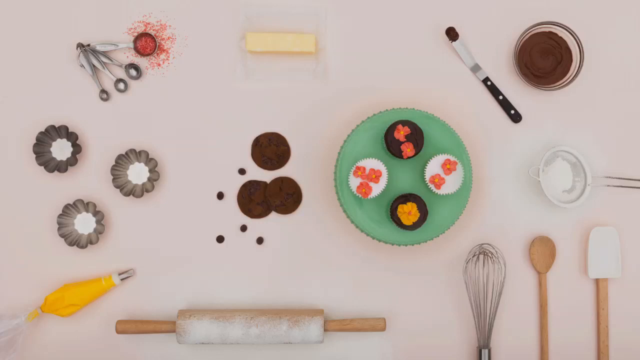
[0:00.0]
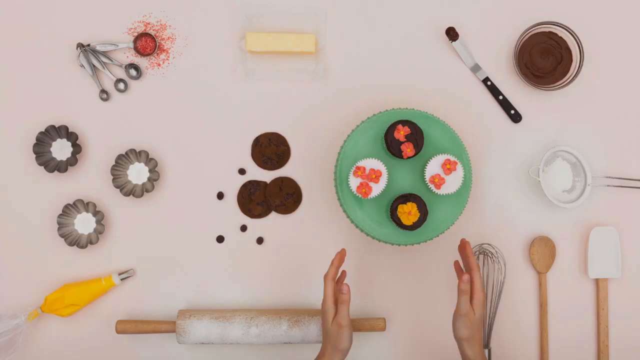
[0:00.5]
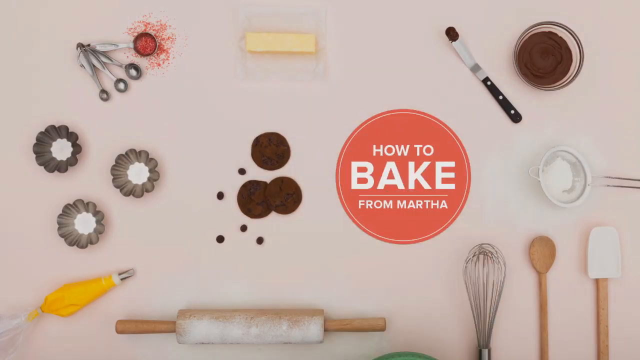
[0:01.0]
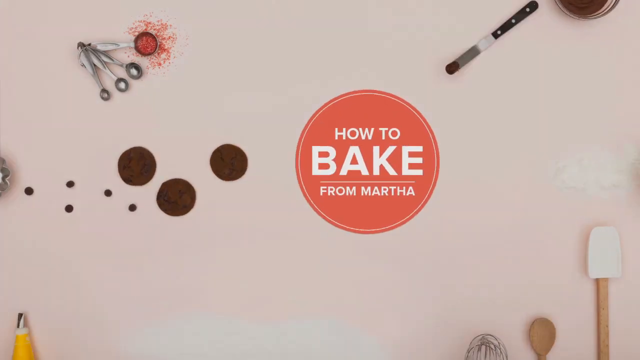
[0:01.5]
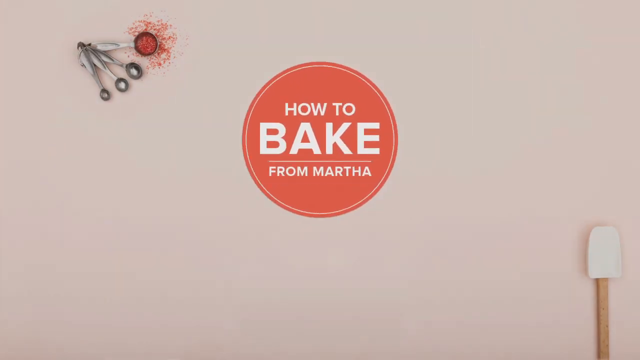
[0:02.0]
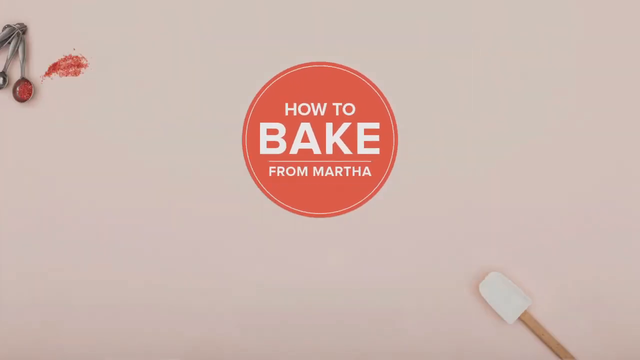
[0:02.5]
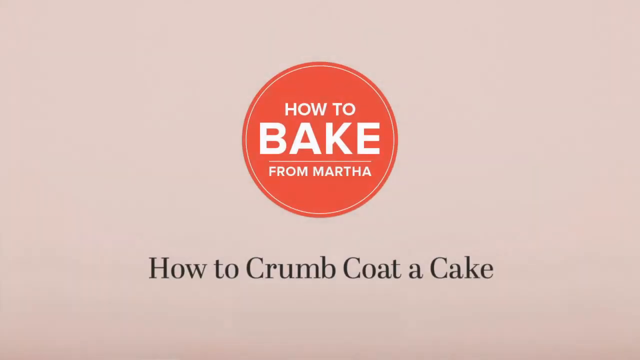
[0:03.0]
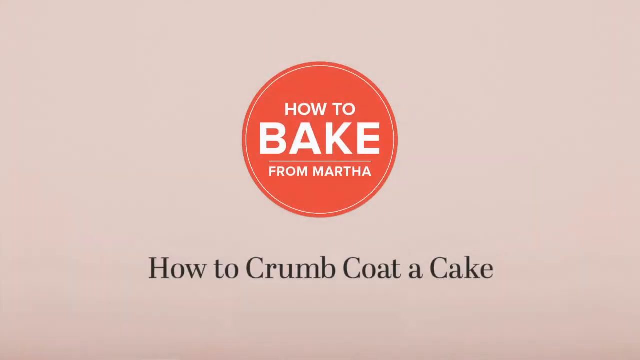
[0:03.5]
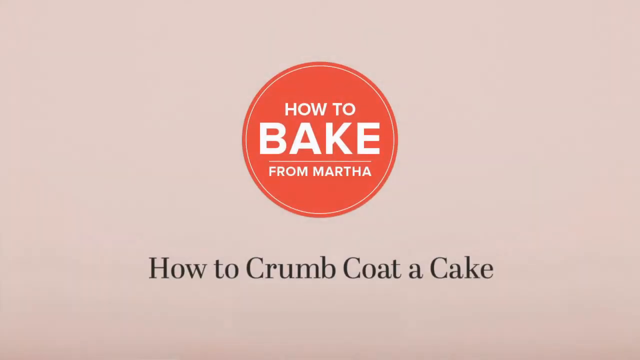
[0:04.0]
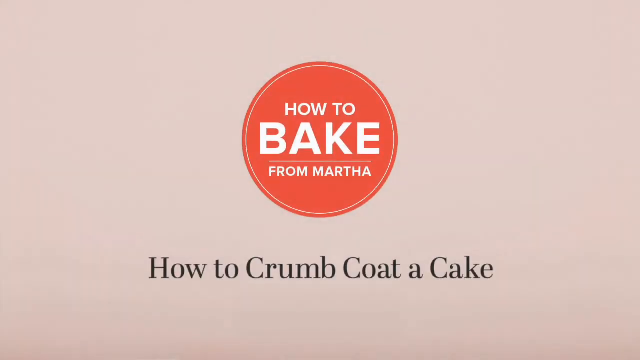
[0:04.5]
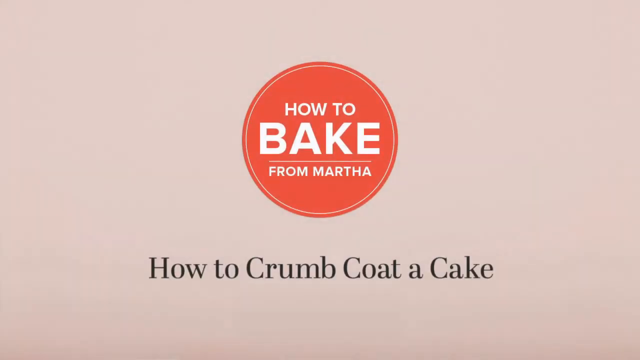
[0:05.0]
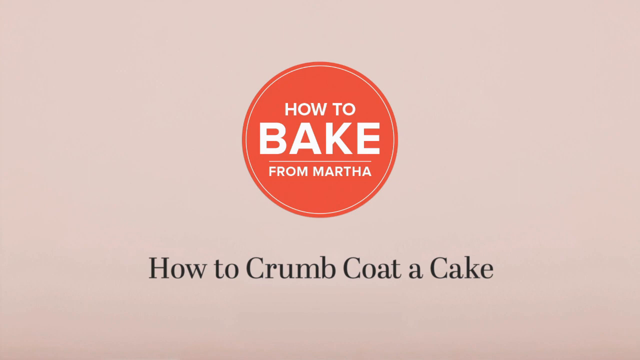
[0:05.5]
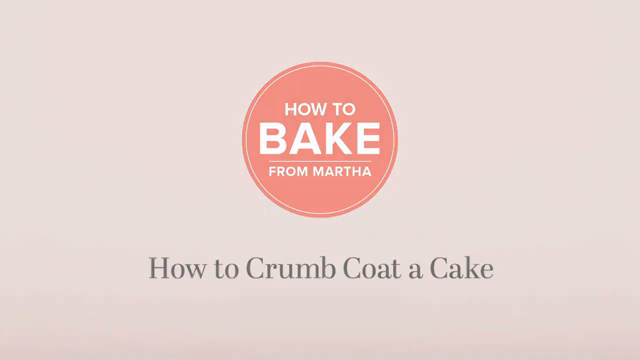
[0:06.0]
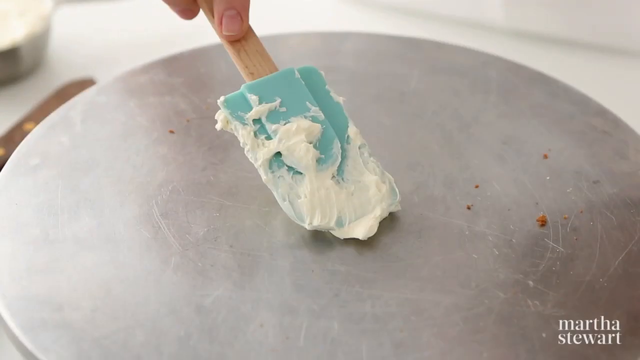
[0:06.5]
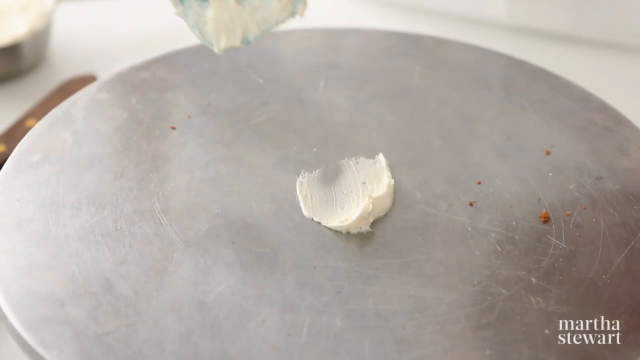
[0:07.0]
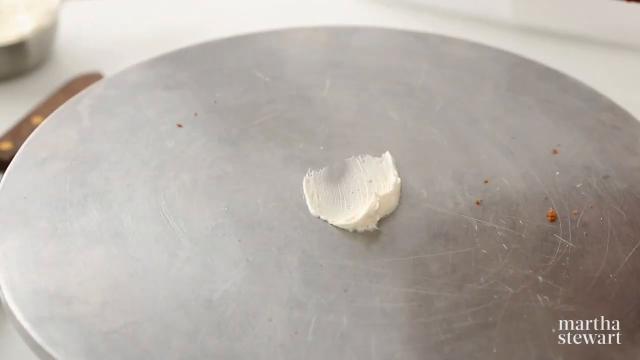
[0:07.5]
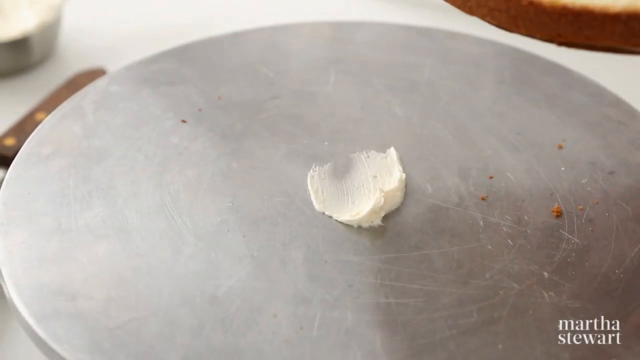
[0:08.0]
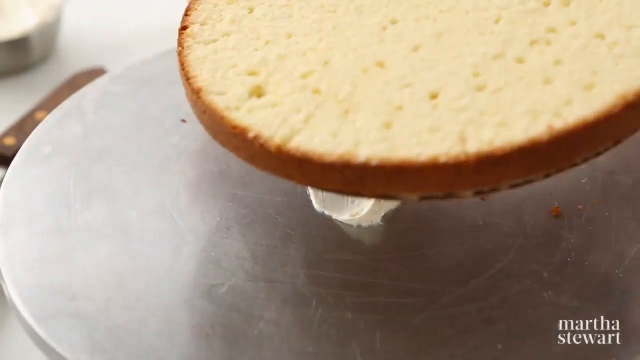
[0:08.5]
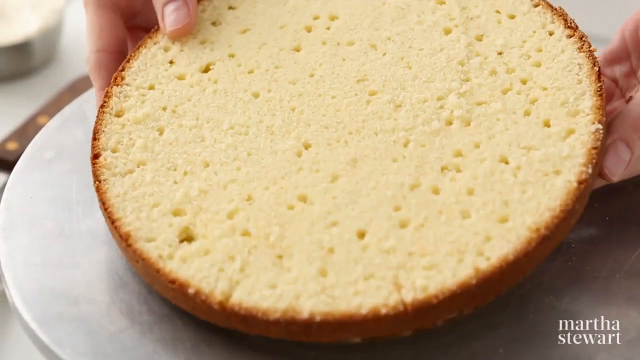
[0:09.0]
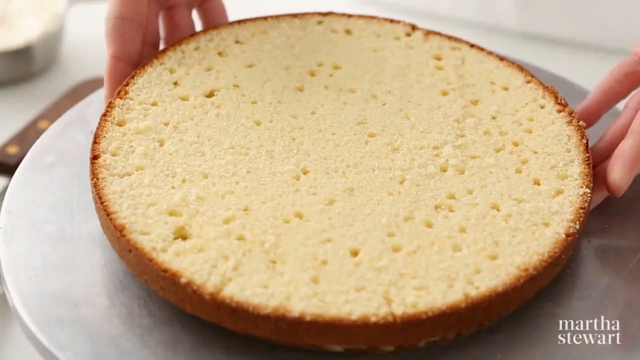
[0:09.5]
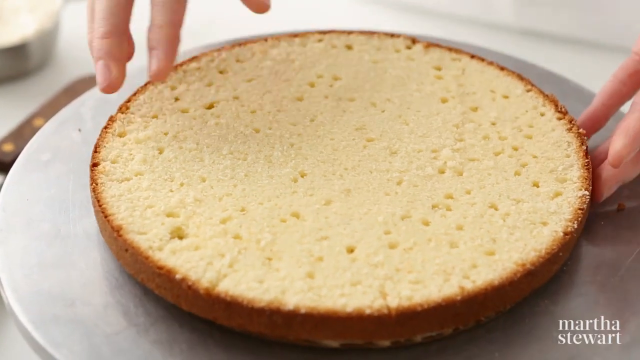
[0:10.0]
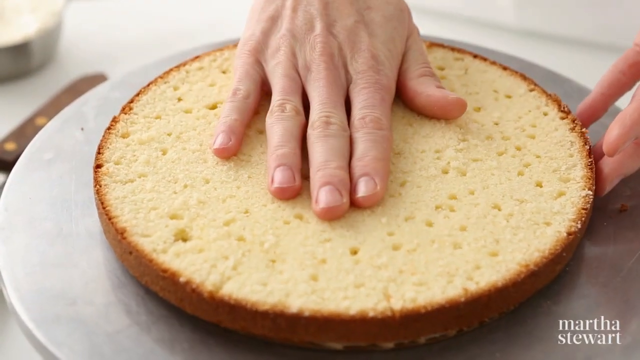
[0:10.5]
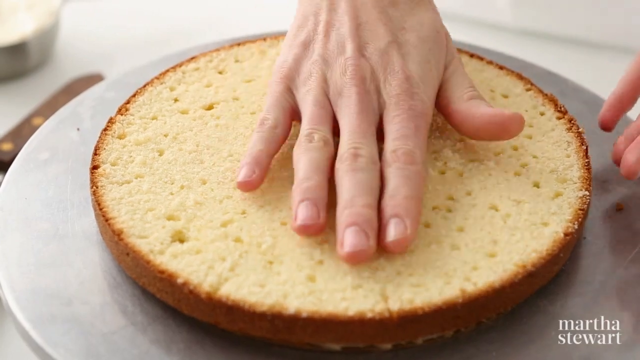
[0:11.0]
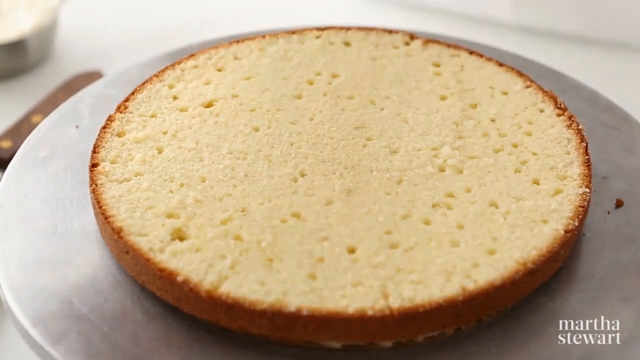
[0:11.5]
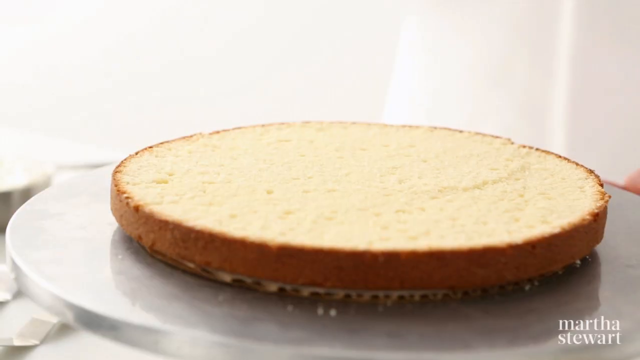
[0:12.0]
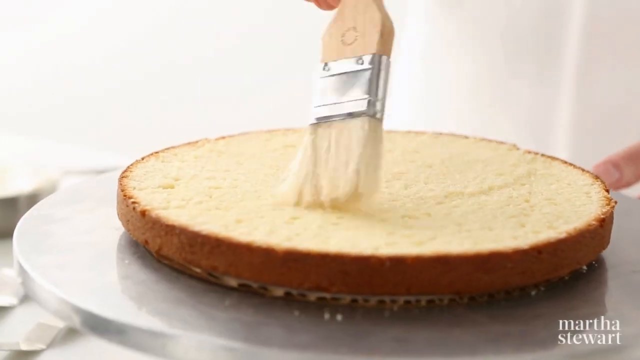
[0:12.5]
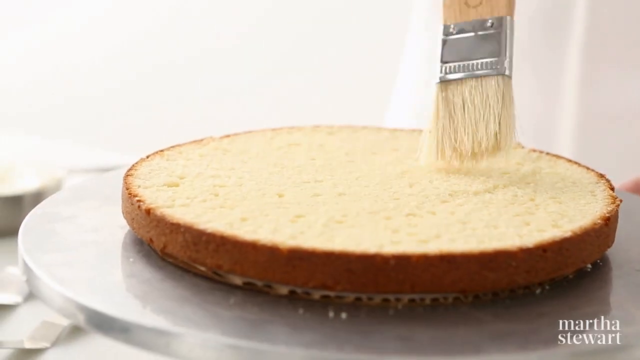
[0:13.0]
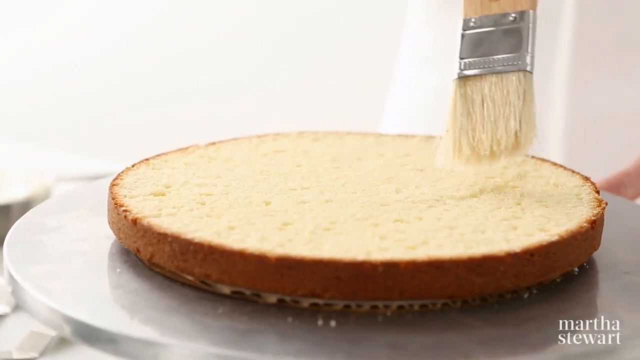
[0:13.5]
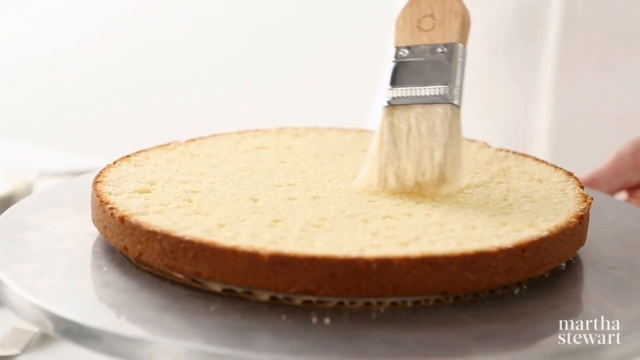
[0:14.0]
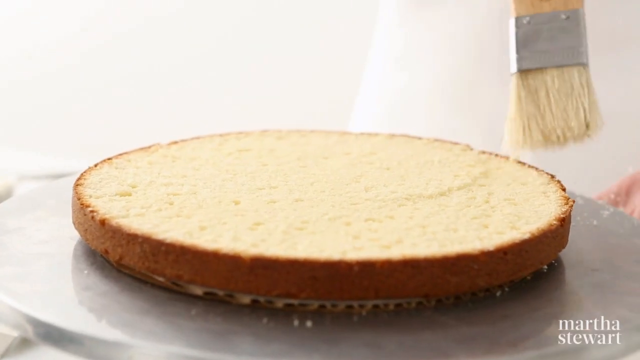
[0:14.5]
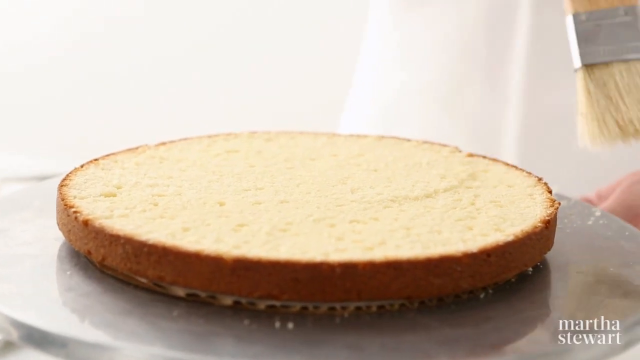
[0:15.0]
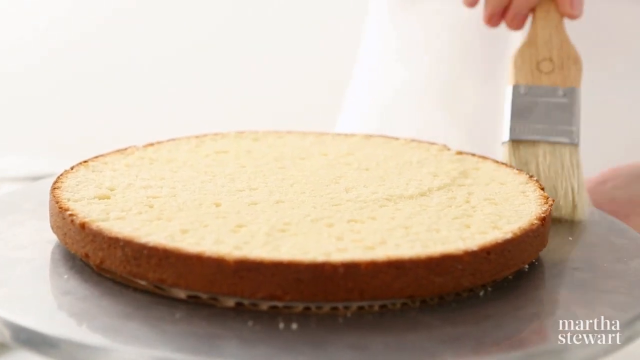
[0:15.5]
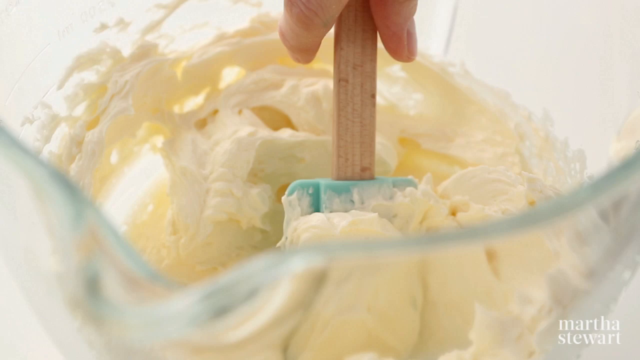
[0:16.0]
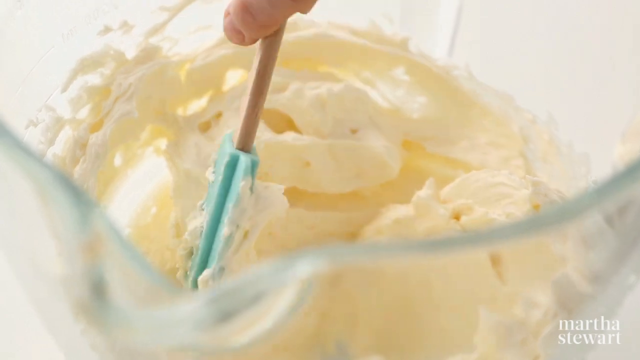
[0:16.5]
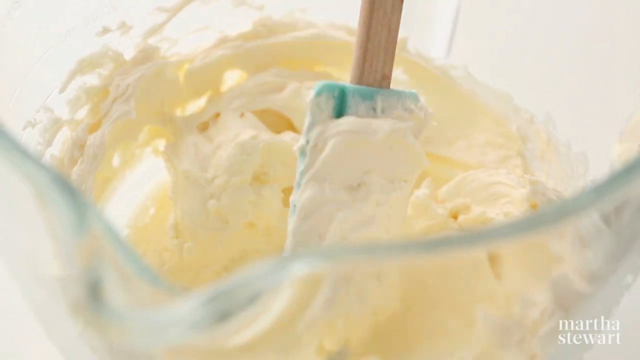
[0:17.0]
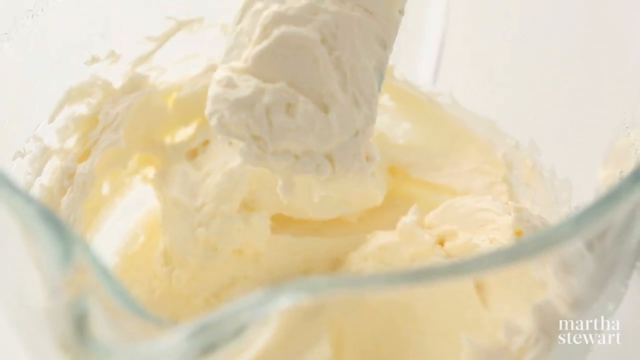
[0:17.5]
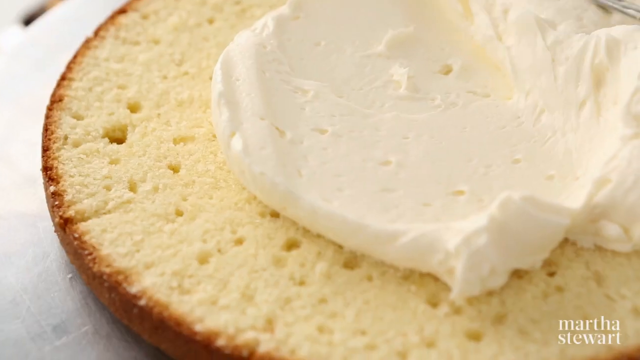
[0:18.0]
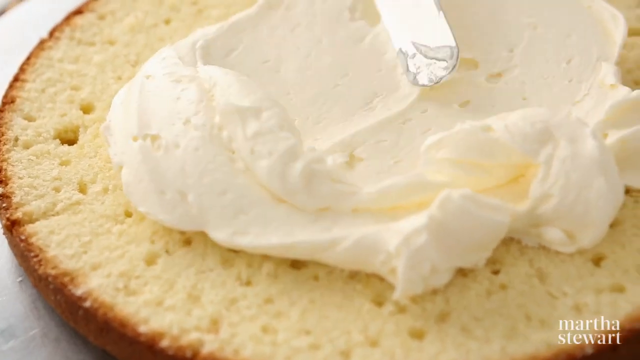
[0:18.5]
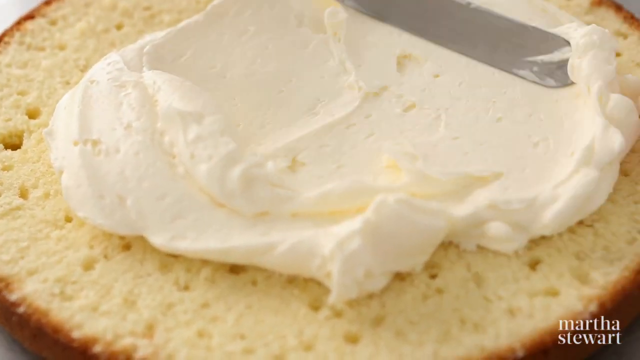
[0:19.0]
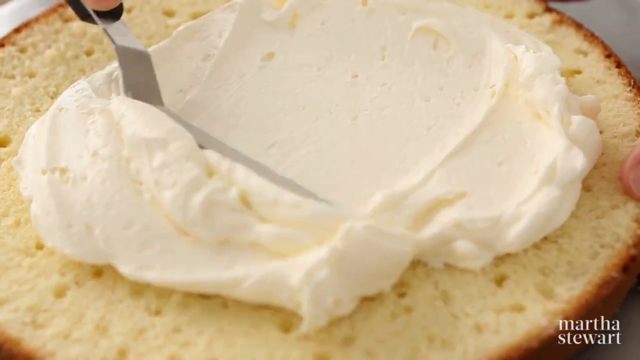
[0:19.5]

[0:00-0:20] What seems to be the intro to a baking tutorial opens with various baking items on a white surface: measuring cups, cookies, cupcakes, icing, piping bags, a rolling pin, a whisk, a sieve, a spatula, a wooden spoon and a slab of butter. The cupcakes are removed, revealing the "how to bake from Martha" logo. The utensils are taken away, and the video's title pops up in black underneath the logo, reading "How to crumb coat a cake". A spatula then places icing on a silver, metal surface, and a sliced piece of cake is put onto the surface on top of the buttercream. A dollop of icing is then spread on the slice of cake.